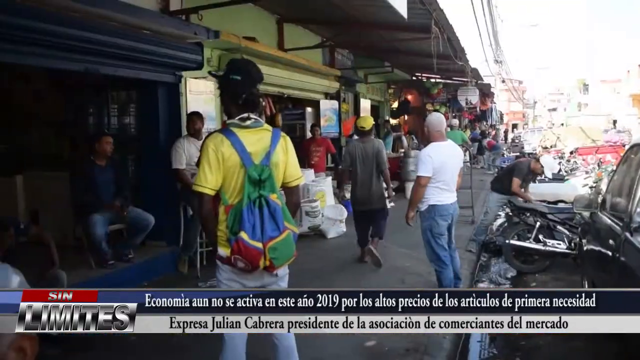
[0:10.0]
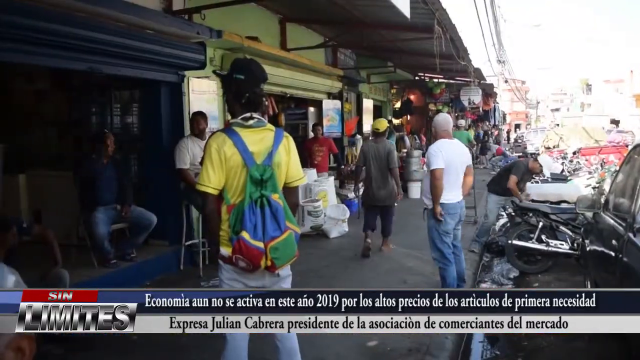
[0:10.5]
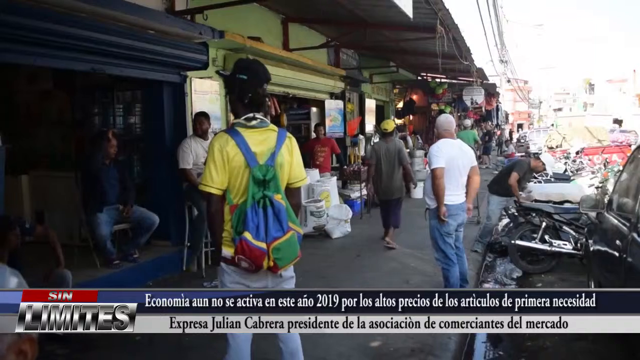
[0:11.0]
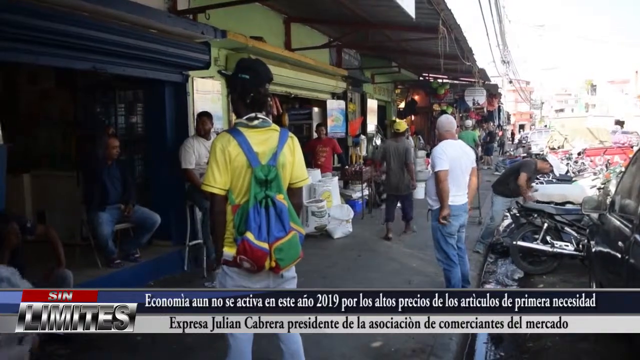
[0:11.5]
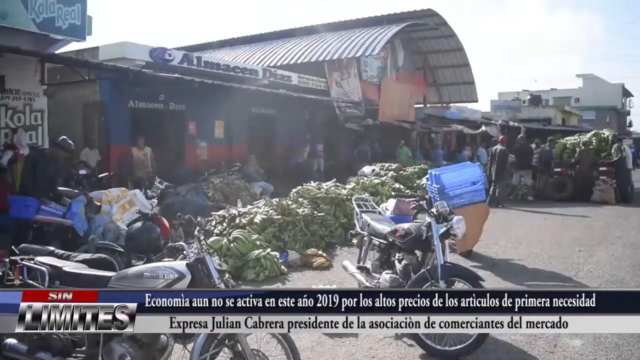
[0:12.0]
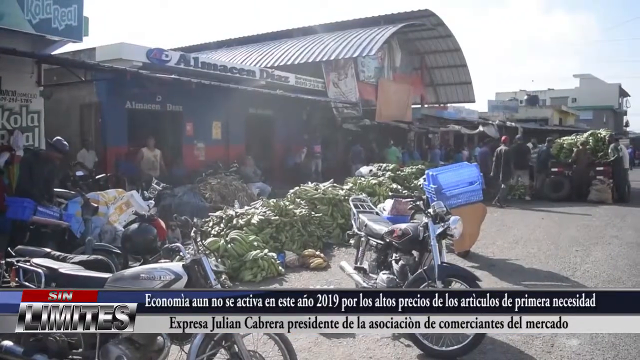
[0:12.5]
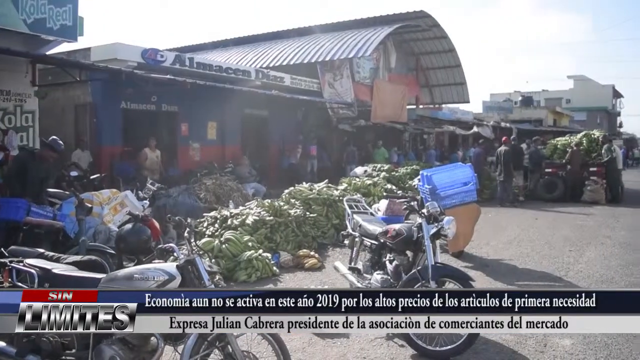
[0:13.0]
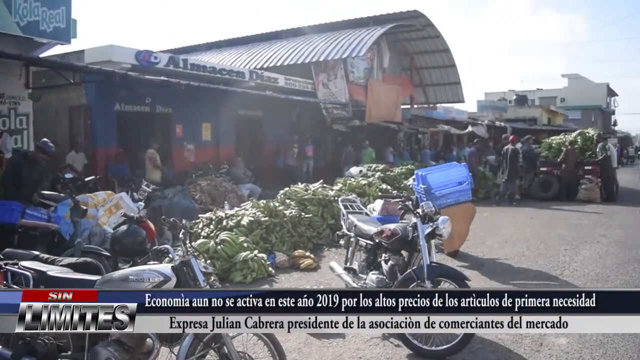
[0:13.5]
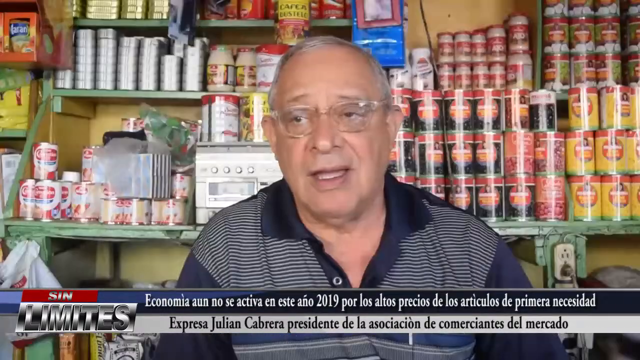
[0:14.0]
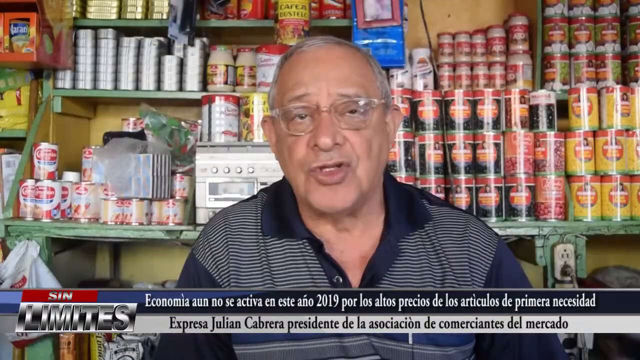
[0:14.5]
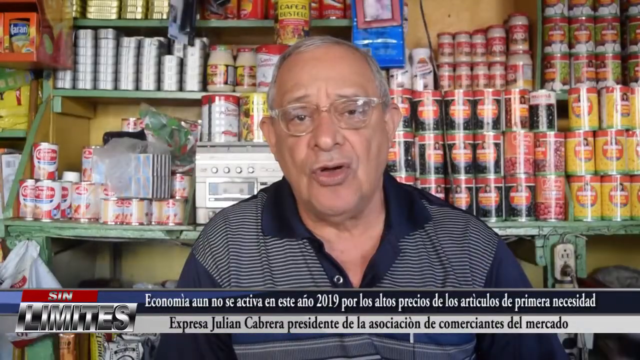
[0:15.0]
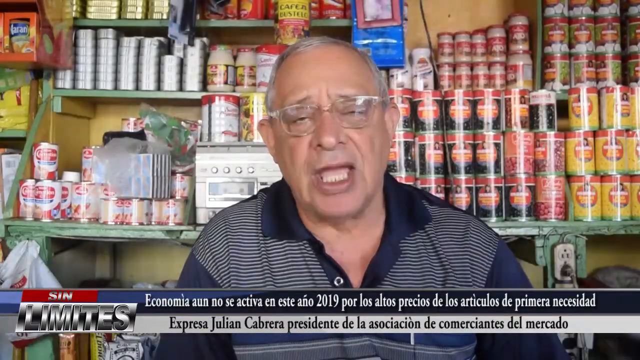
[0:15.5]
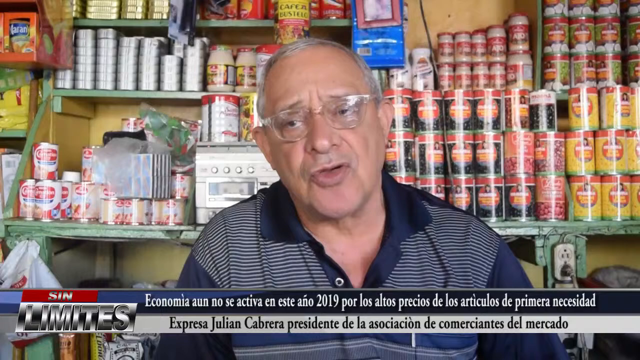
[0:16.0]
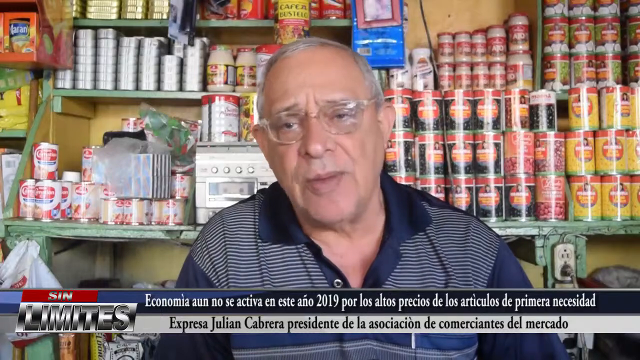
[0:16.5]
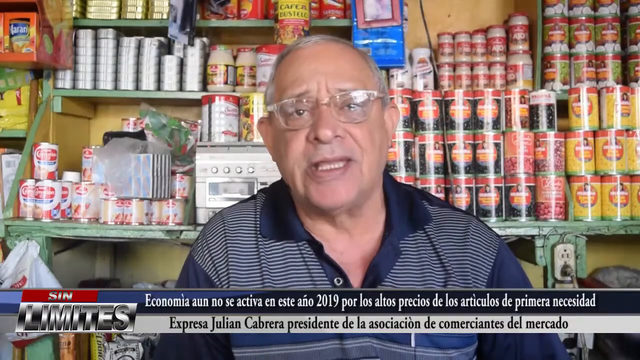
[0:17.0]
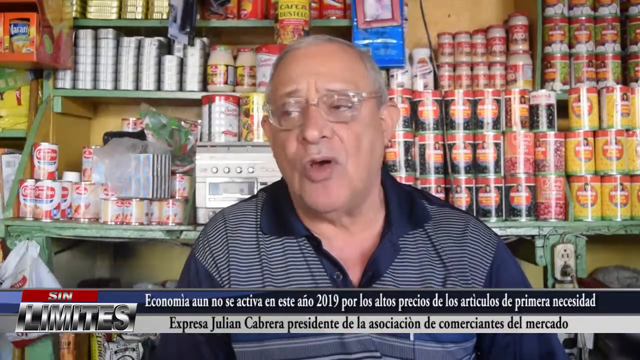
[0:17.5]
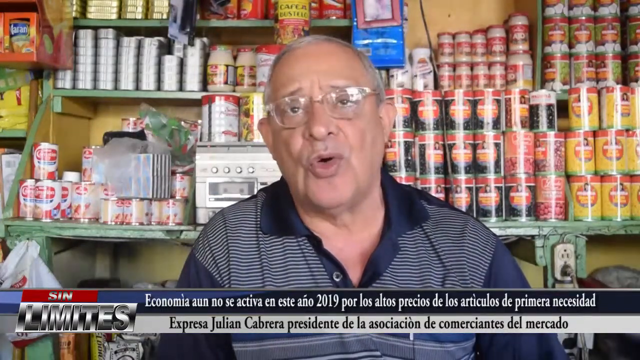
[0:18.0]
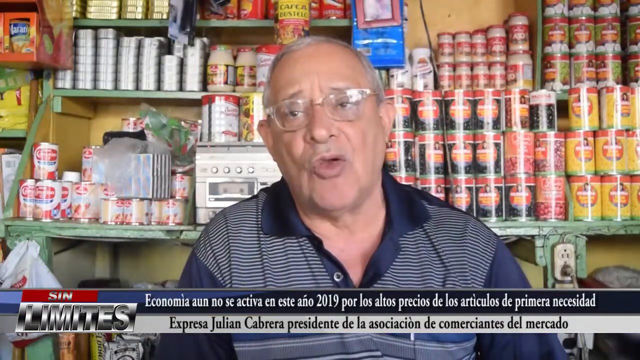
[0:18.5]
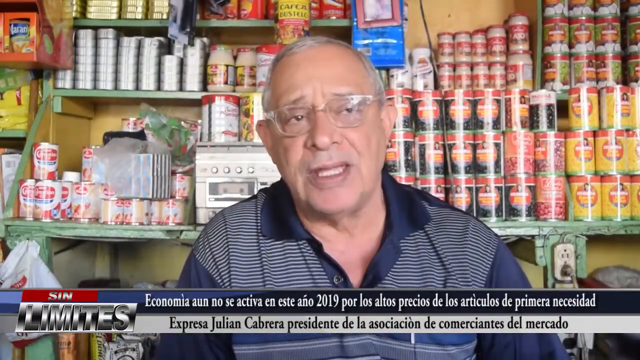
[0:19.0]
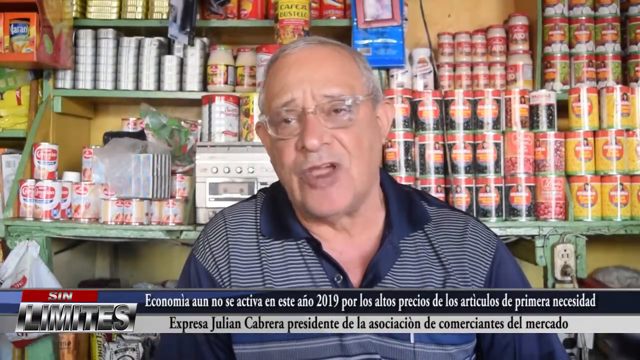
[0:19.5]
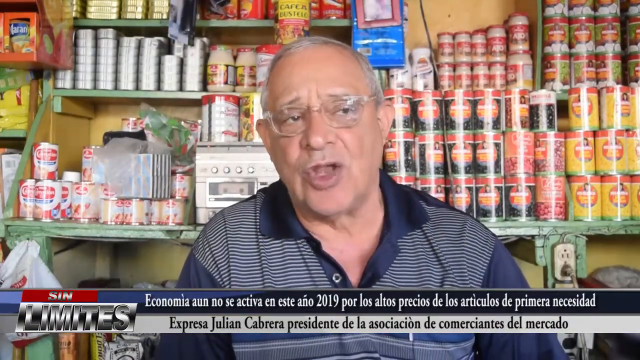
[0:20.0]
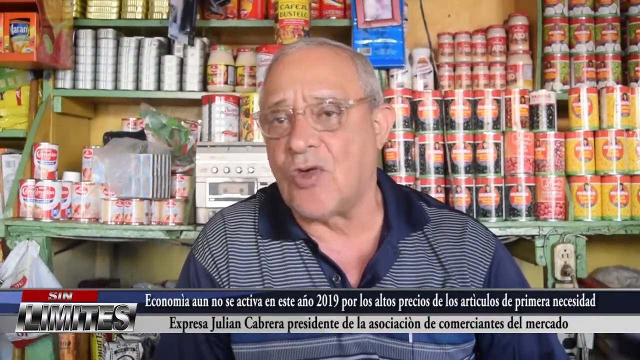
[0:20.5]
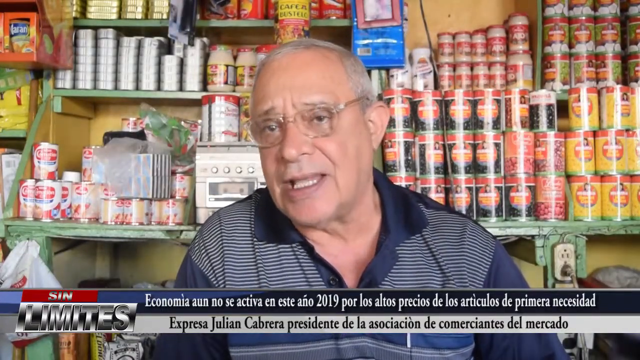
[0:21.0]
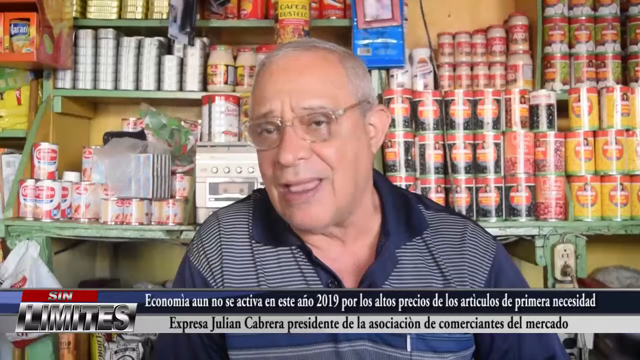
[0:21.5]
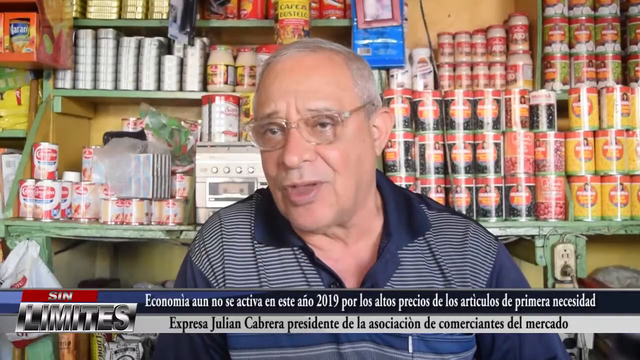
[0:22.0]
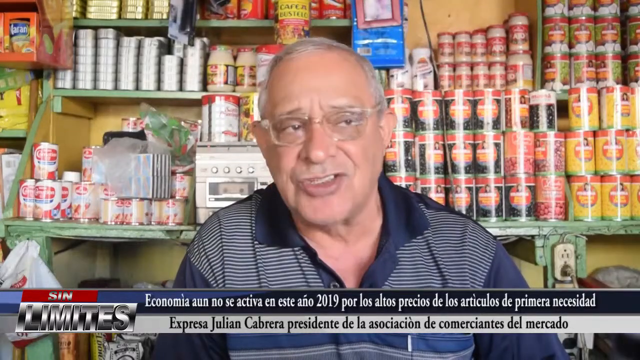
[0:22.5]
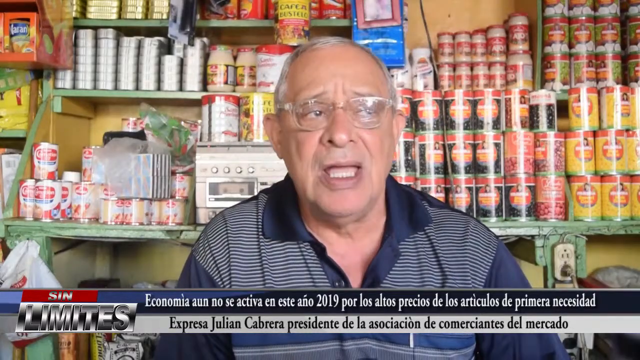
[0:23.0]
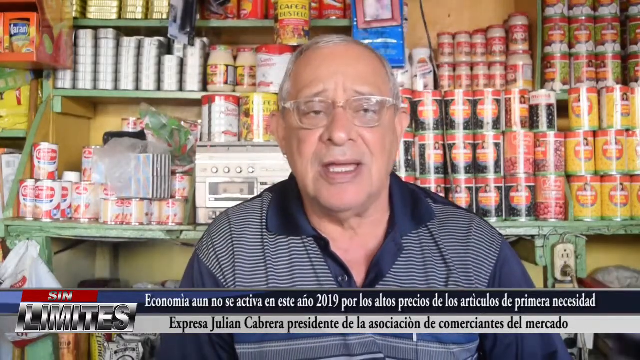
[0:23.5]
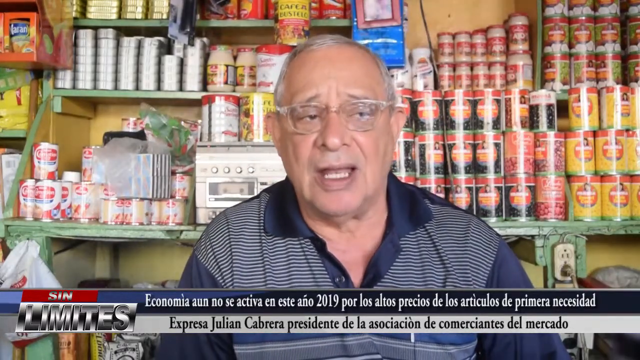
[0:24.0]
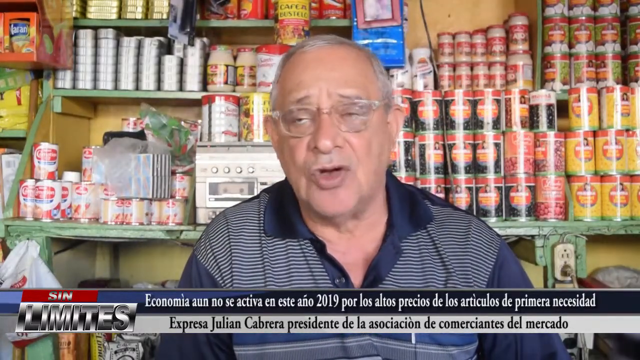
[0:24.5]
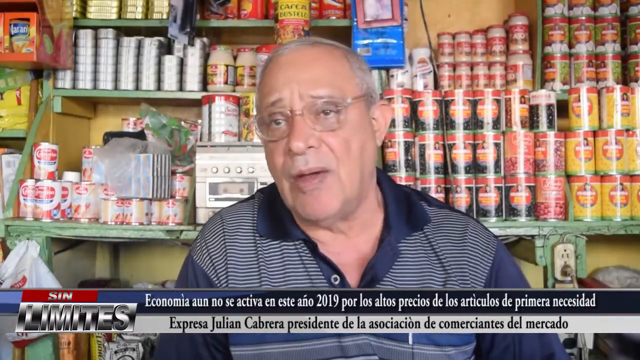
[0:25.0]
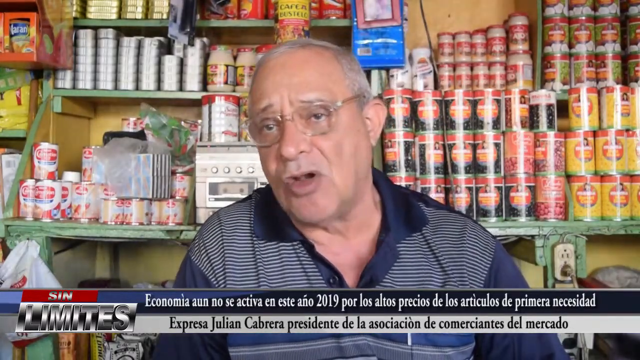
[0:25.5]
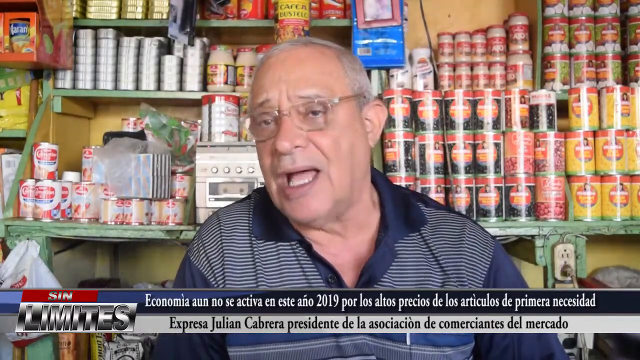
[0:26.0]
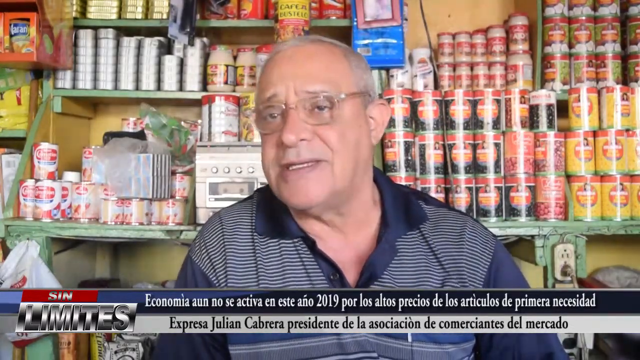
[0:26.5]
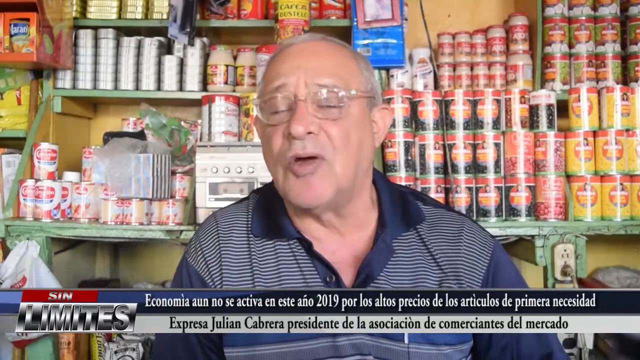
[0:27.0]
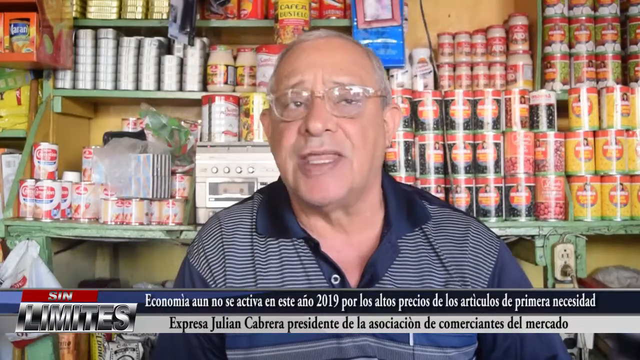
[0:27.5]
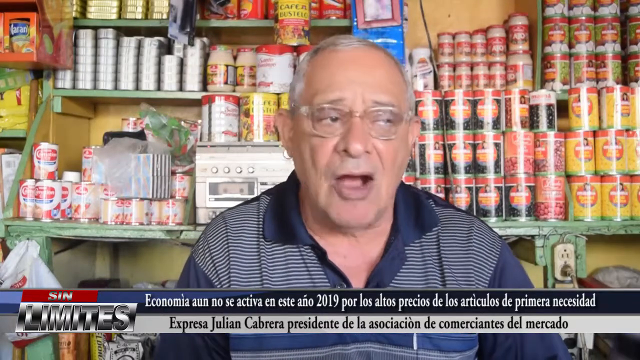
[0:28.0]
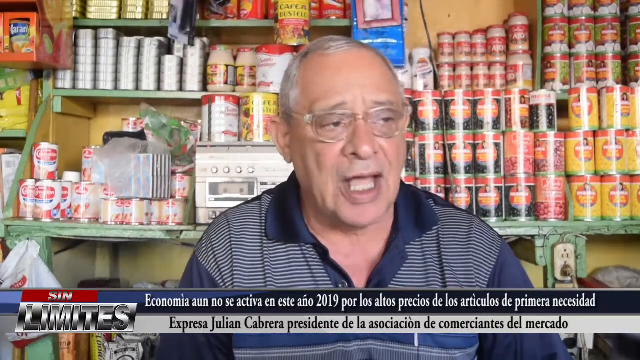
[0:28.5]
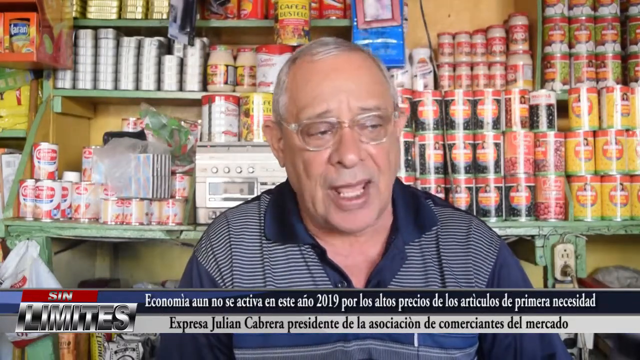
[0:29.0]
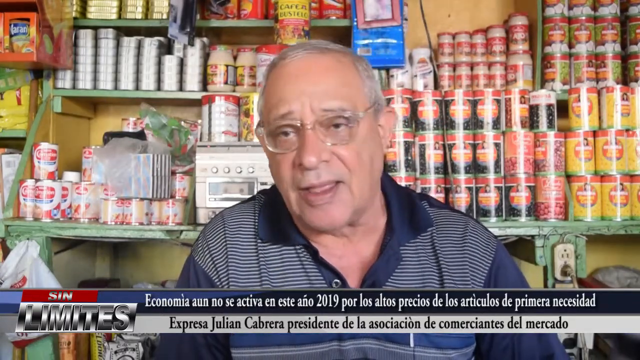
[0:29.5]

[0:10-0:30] There are lots of bananas and many different foods. People walk along the street, among them a man in a yellow shirt wearing a blue, green, red and yellow backpack. People are out and about, walking down the streets and getting items that are for sale. A man is then interviewed; he stands in front of many canned food items and might work at a grocery store of some sort. Non-English captions mention the economy and 2019. The caption graphics have a navy bar at the top with white font and a white bar at the bottom with black font.